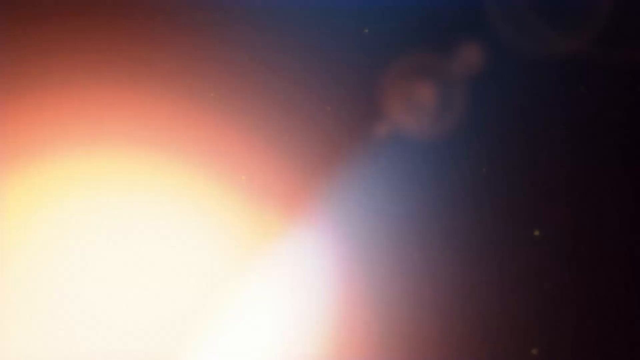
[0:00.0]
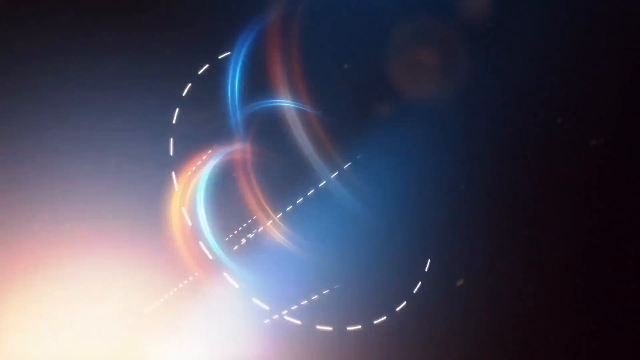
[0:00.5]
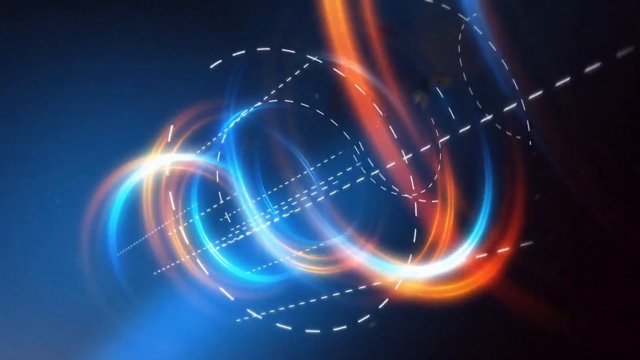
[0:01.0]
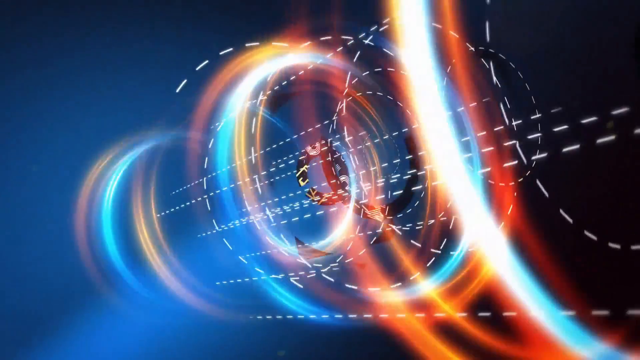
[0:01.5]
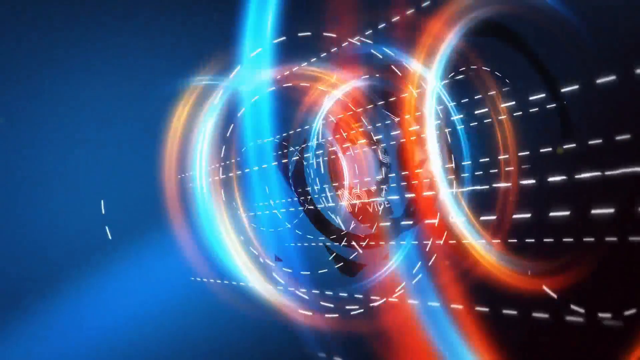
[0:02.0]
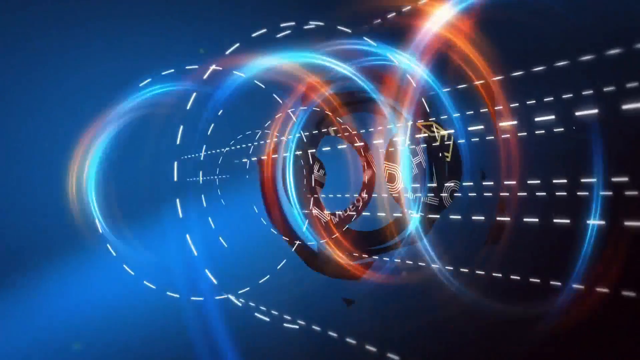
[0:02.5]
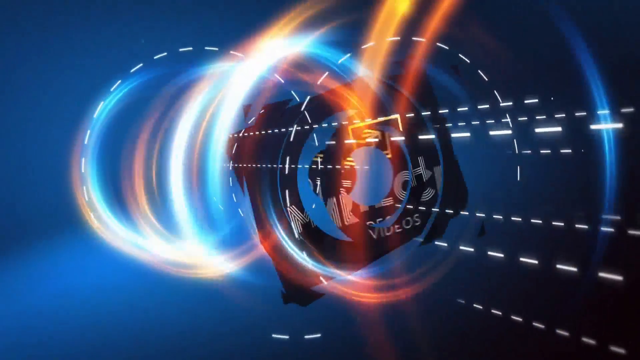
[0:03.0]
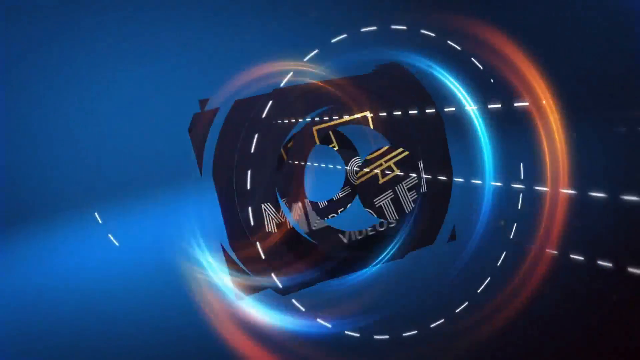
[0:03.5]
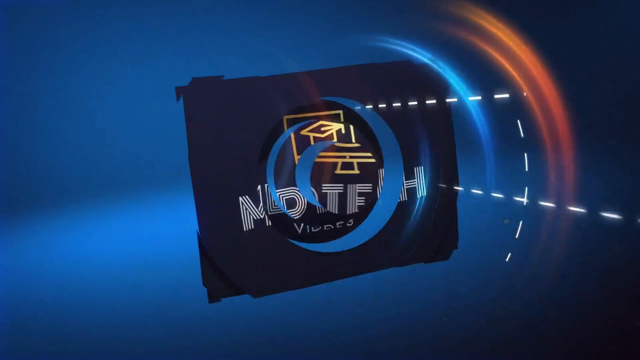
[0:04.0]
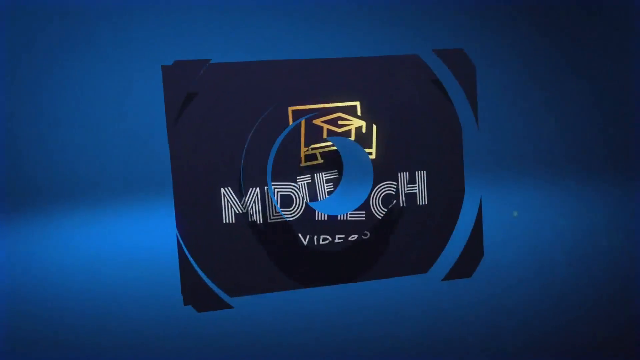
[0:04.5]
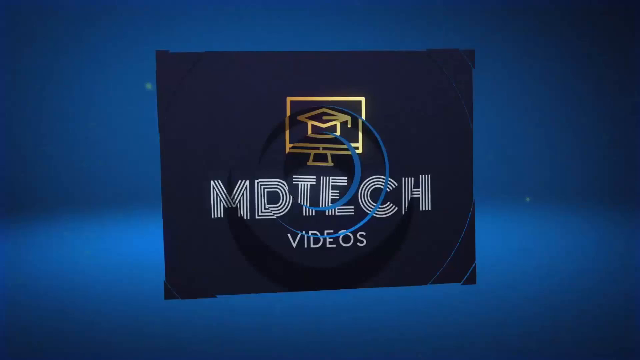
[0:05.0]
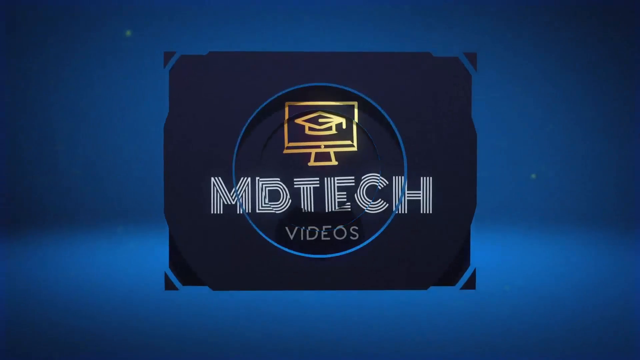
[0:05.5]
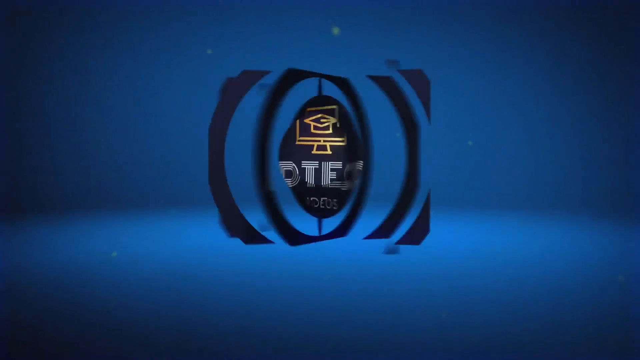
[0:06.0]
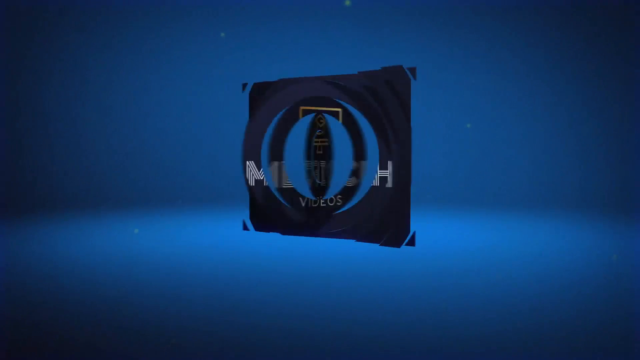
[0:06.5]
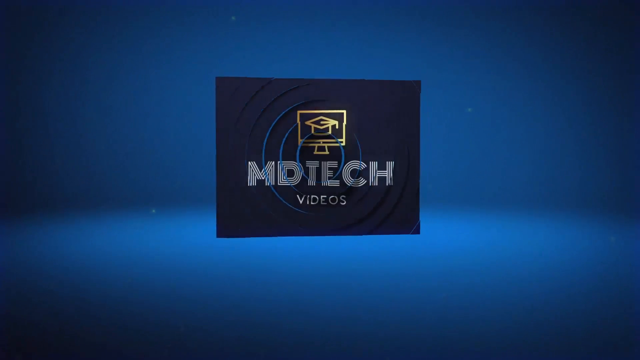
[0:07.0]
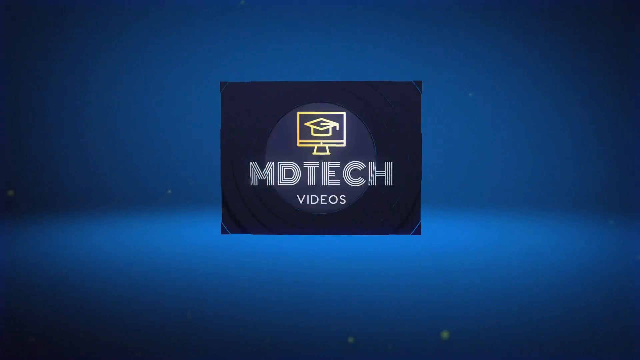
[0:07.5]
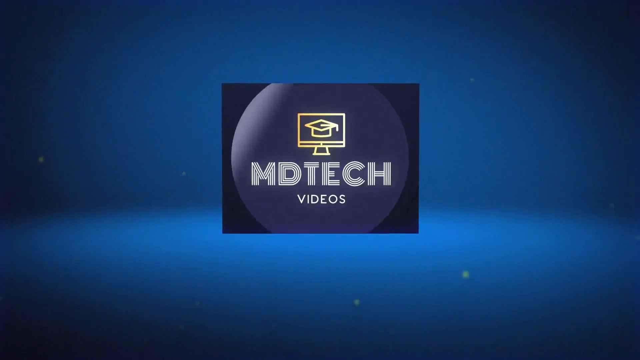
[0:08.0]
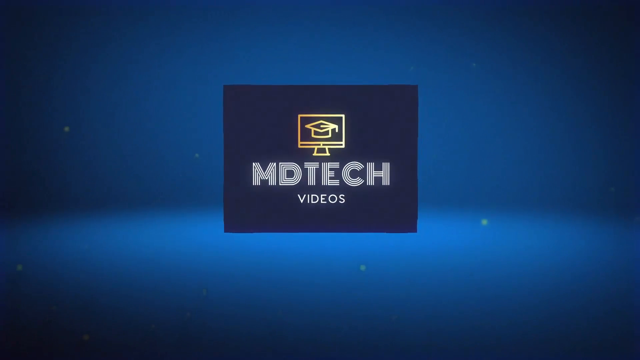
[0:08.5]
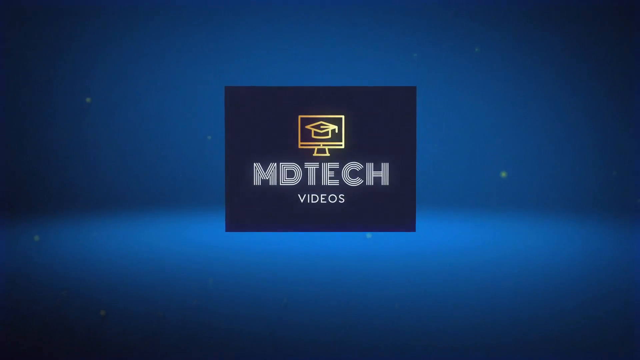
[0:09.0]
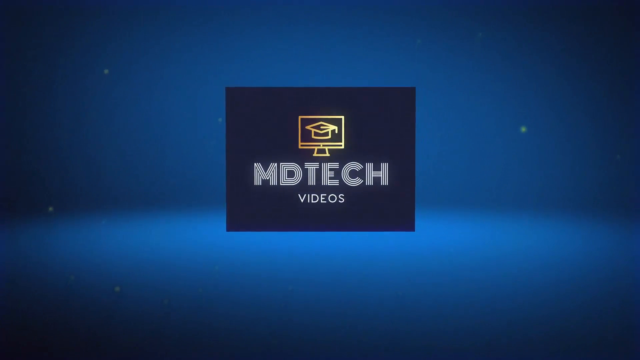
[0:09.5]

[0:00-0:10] The video opens with the MD Tech Videos logo, which appears in a high-tech way: lights come out of it and it kind of swirls into its shape. It is a black square, almost like a flag, with a gold outline of a computer screen bearing a graduation hat above it. Below is "MD Tech", each letter containing several lines within it, and "videos" at the bottom.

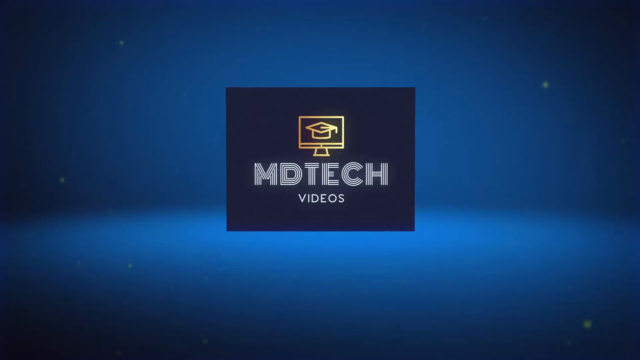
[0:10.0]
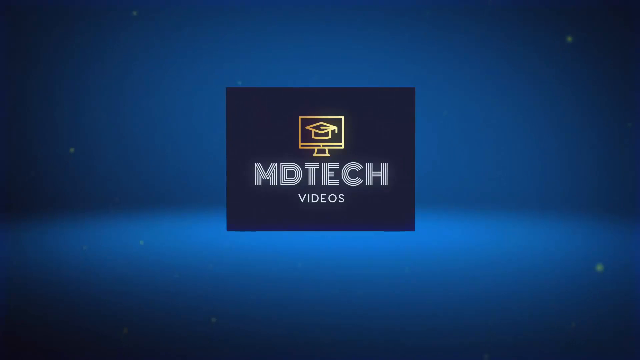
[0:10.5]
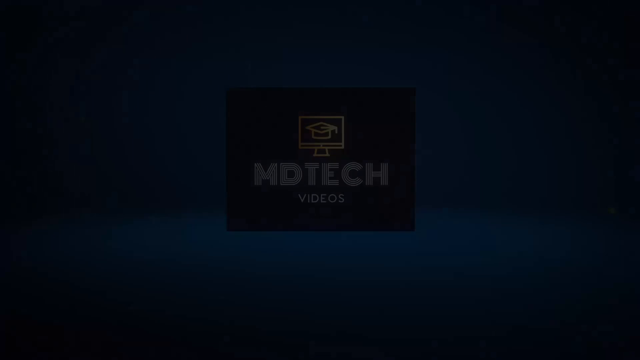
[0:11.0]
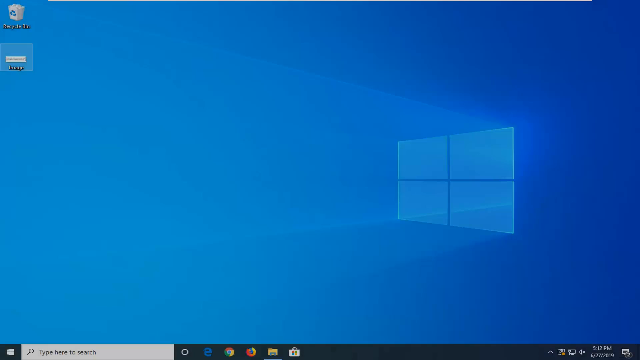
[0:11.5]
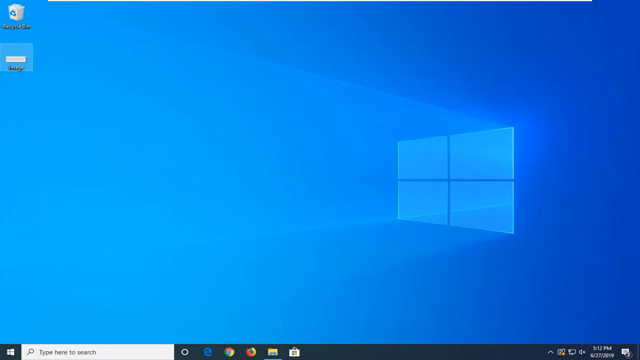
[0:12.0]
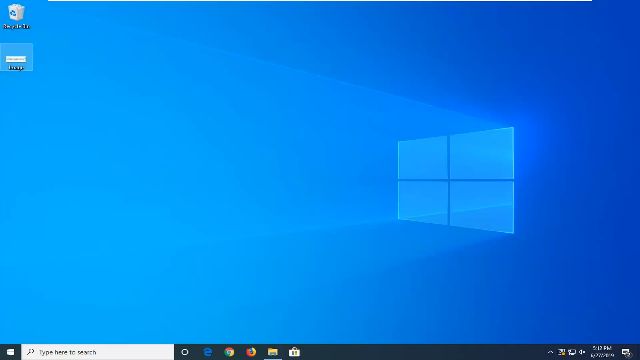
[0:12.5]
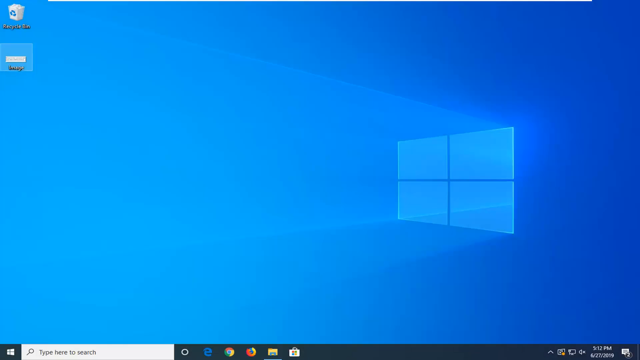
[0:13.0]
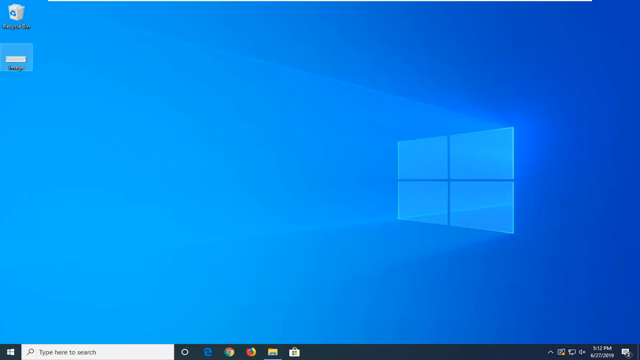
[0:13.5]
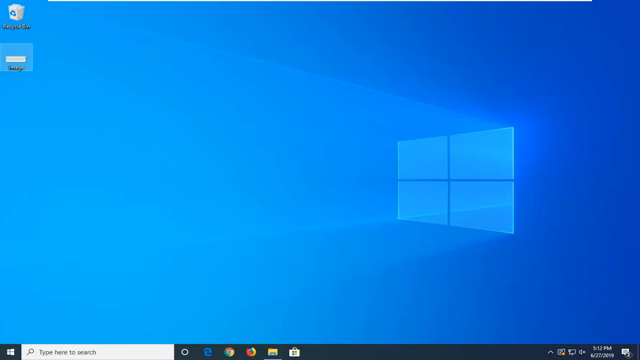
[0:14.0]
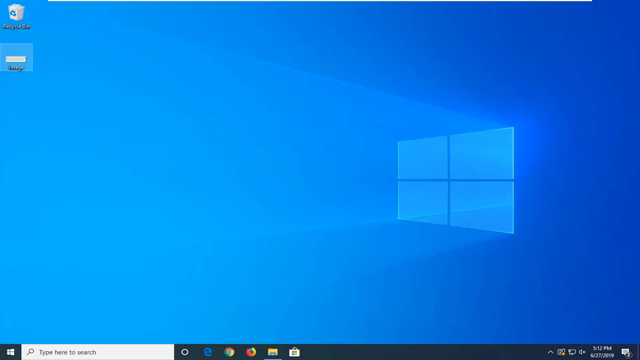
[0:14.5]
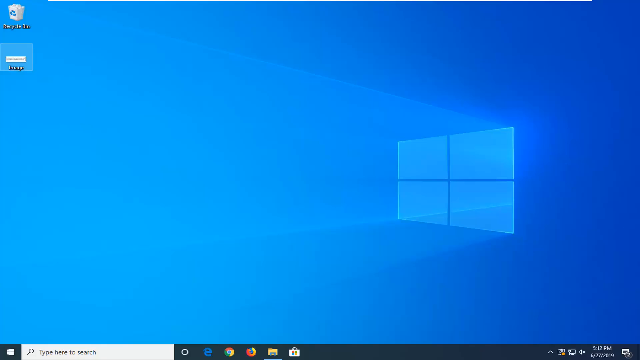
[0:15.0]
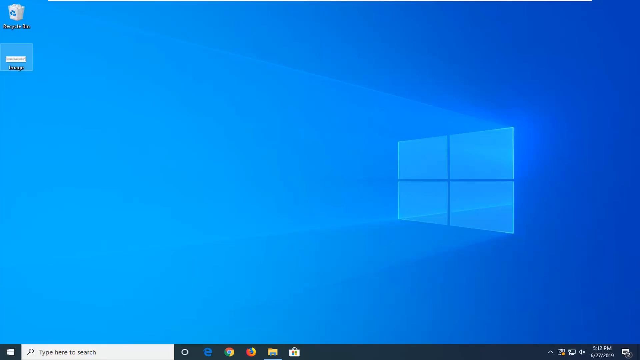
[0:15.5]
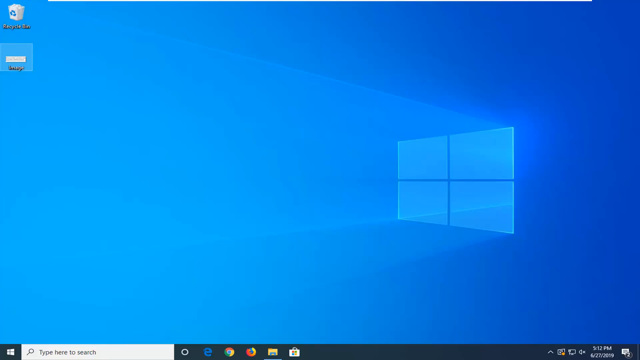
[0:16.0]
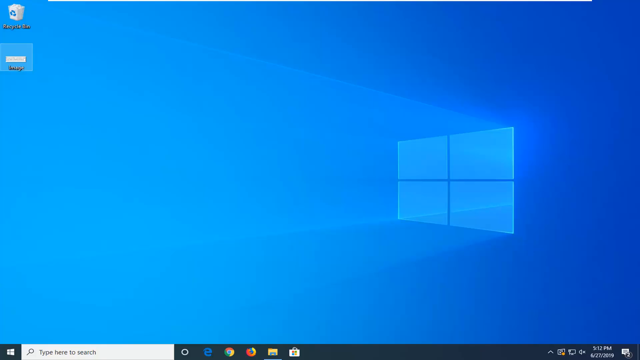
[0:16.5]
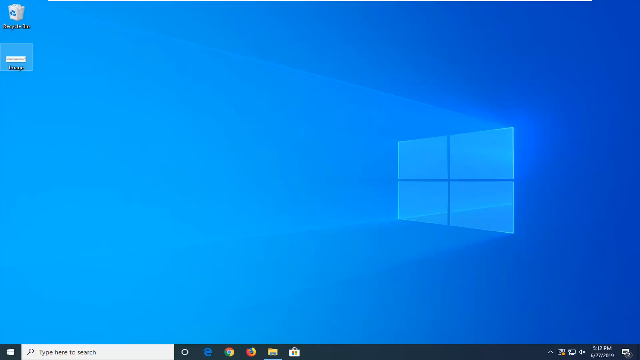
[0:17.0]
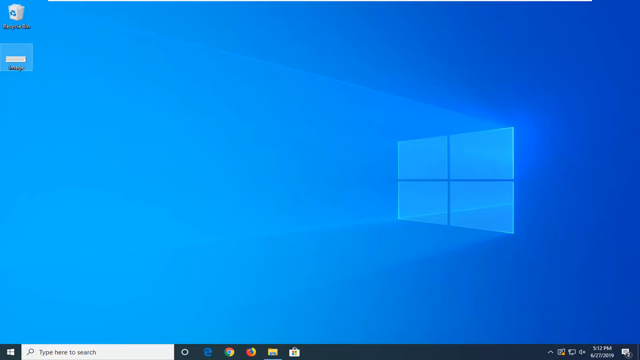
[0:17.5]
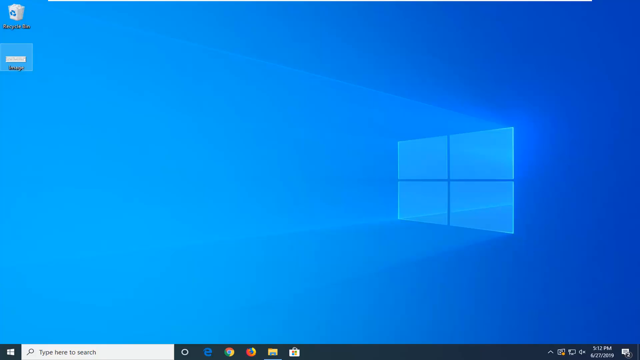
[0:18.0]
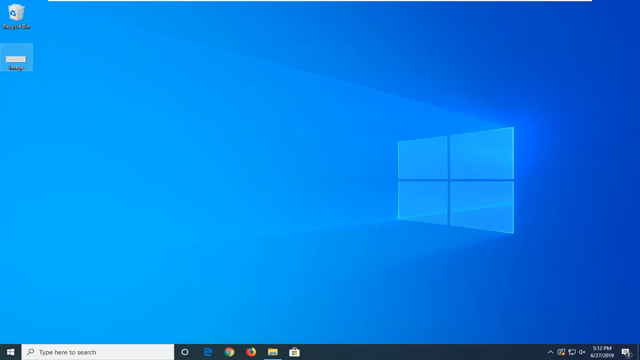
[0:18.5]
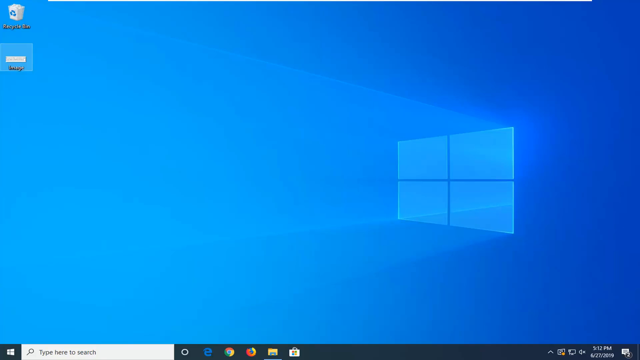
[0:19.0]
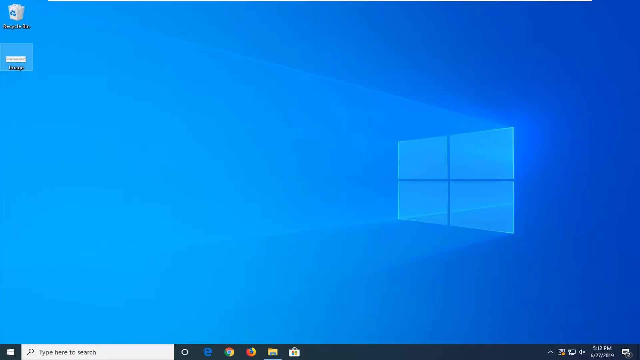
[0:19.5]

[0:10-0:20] The MD Tech Videos logo appears in a black square, with an emblem above it of a golden computer screen showing a graduation hat like one worn at graduation. The video then goes straight to a computer screen showing the Windows symbol, with the recycle bin at the upper right.